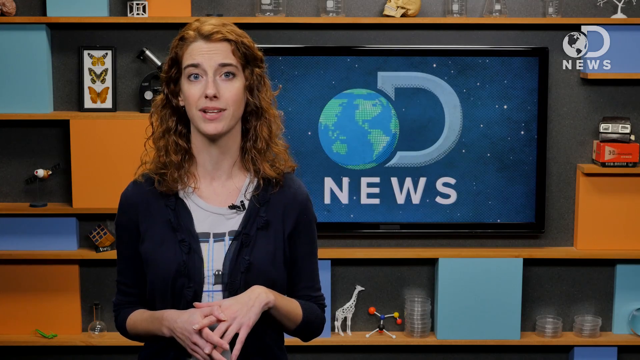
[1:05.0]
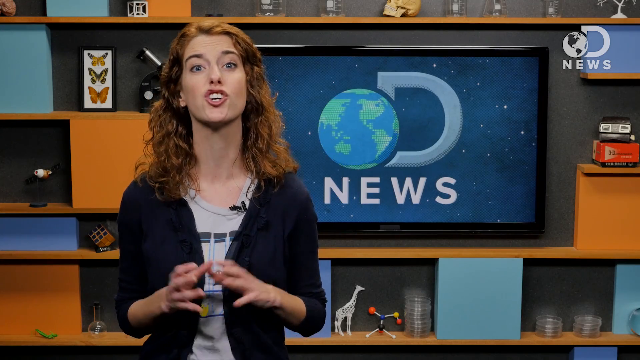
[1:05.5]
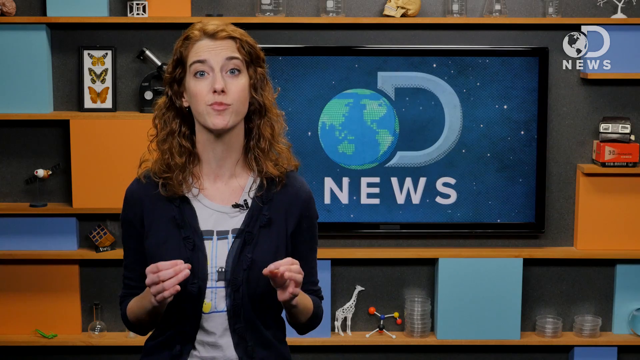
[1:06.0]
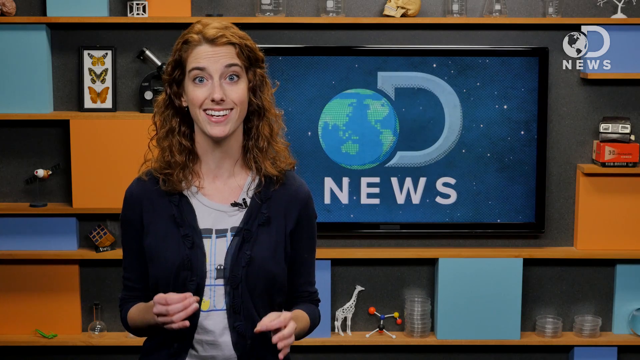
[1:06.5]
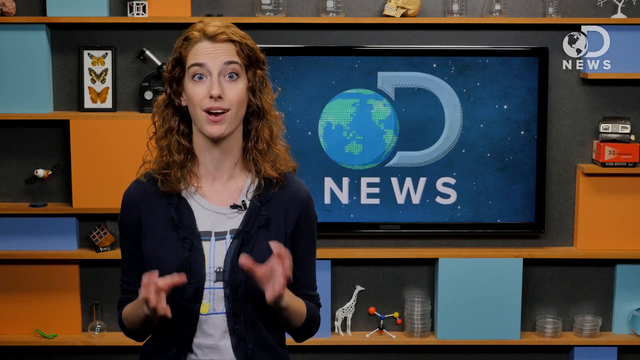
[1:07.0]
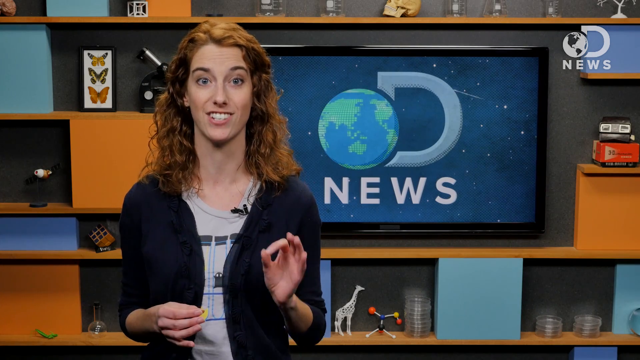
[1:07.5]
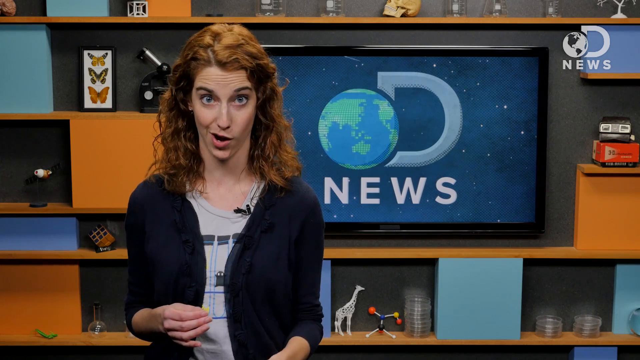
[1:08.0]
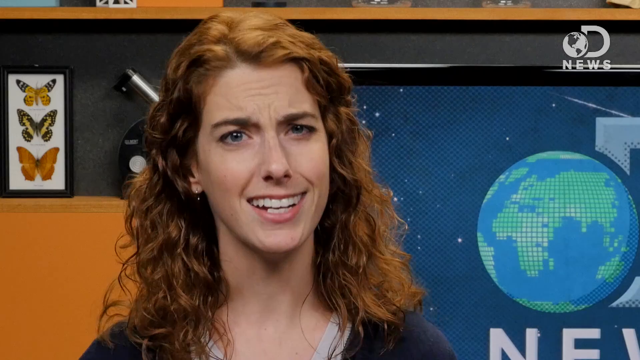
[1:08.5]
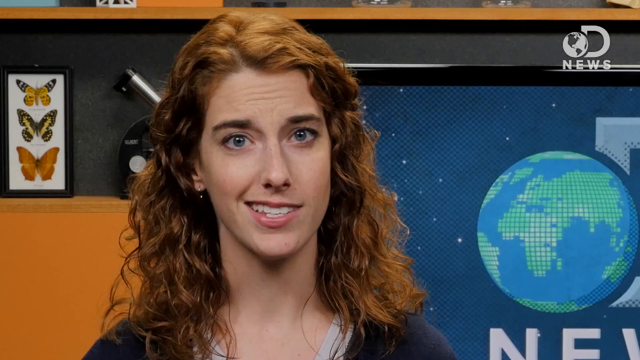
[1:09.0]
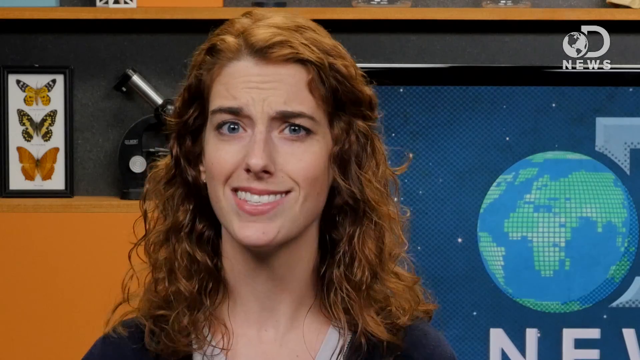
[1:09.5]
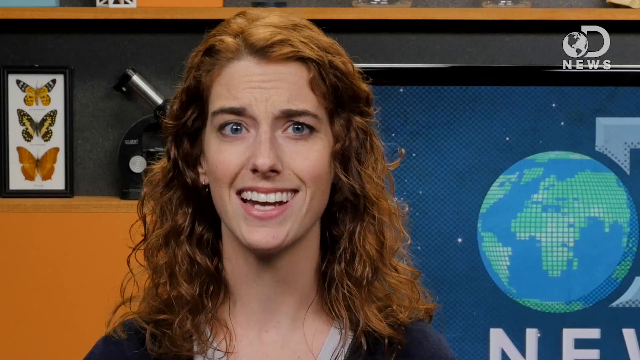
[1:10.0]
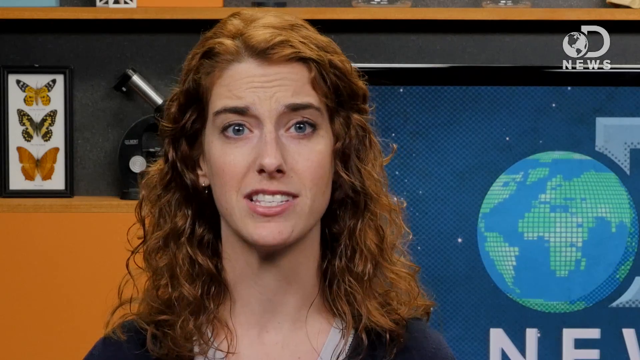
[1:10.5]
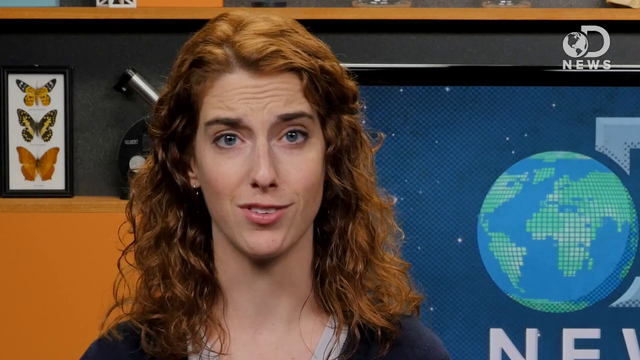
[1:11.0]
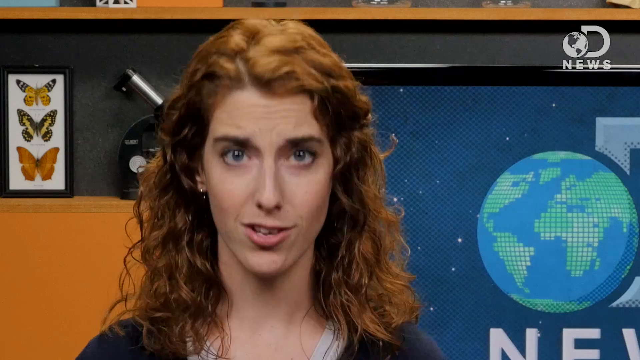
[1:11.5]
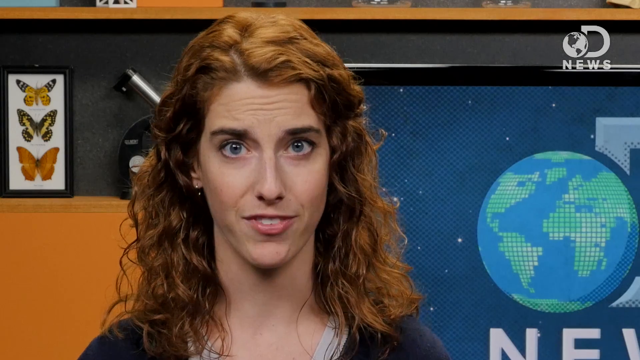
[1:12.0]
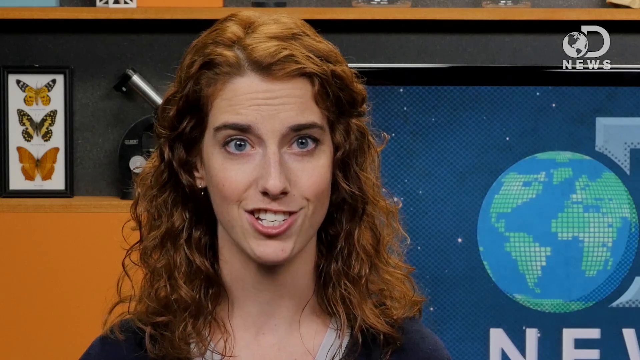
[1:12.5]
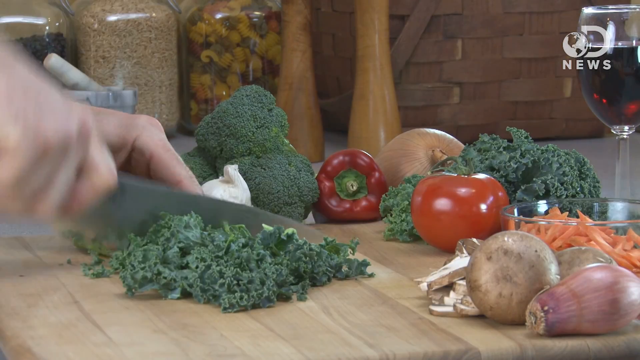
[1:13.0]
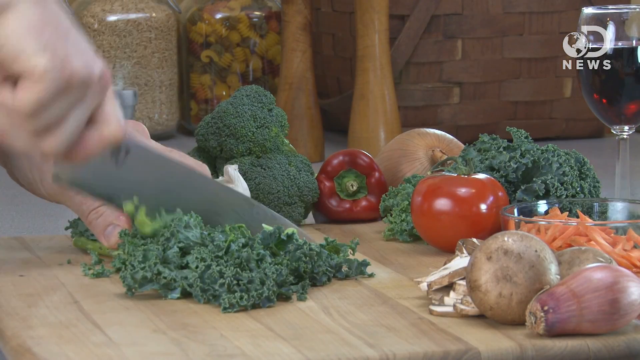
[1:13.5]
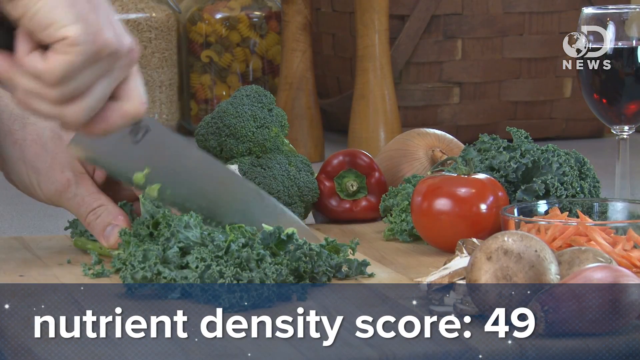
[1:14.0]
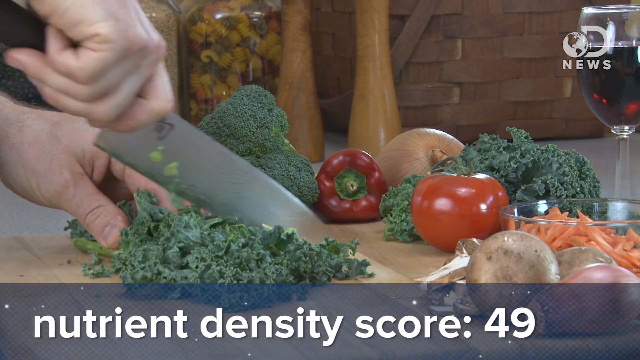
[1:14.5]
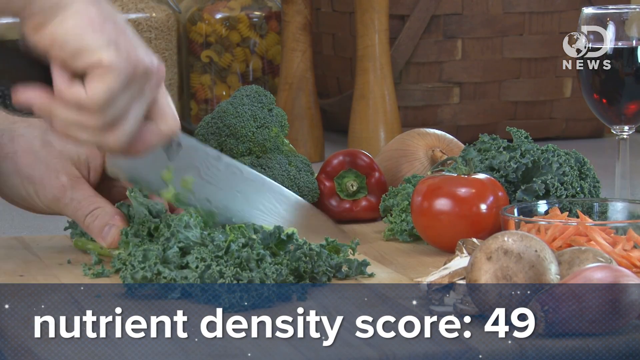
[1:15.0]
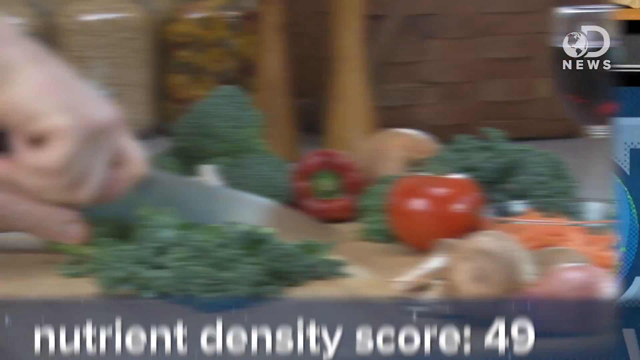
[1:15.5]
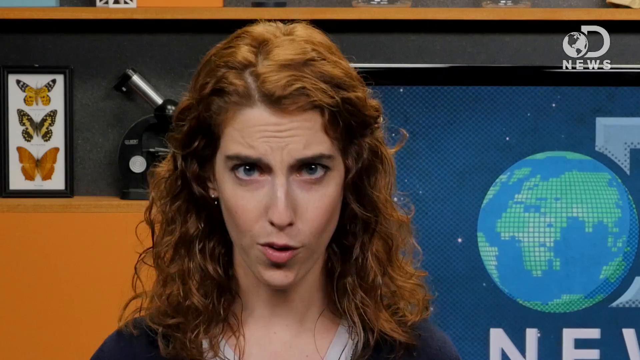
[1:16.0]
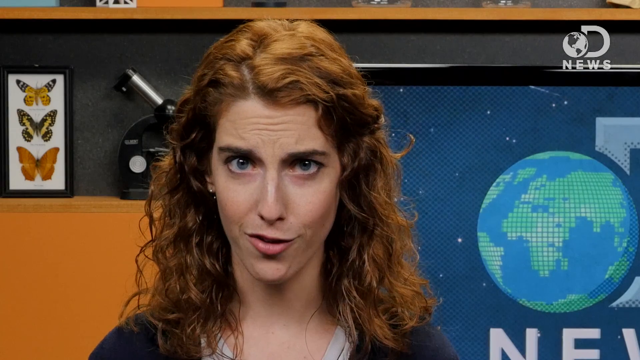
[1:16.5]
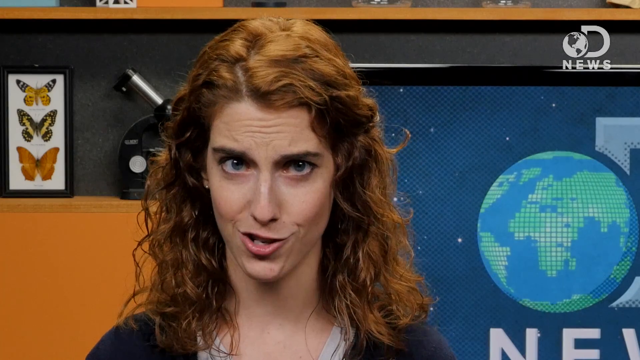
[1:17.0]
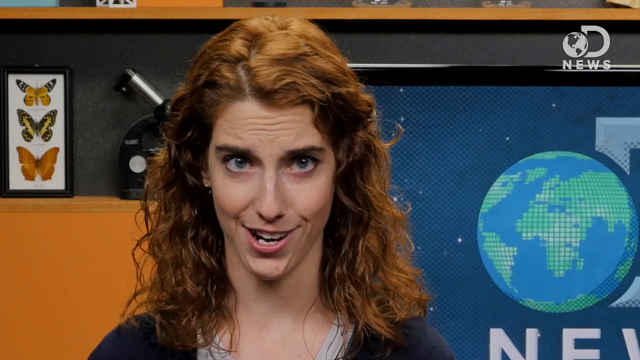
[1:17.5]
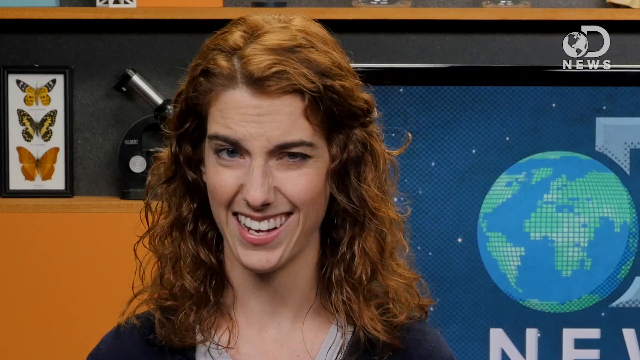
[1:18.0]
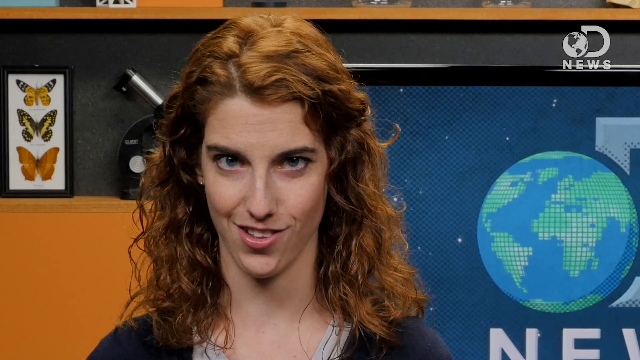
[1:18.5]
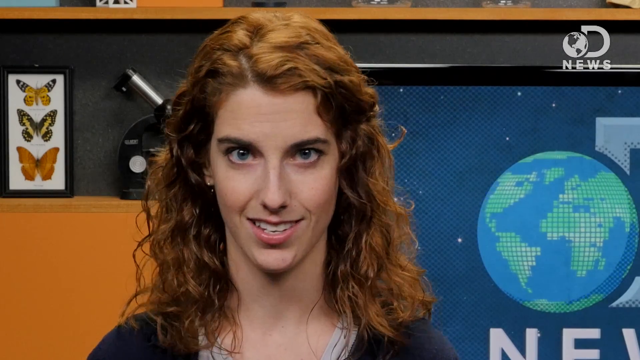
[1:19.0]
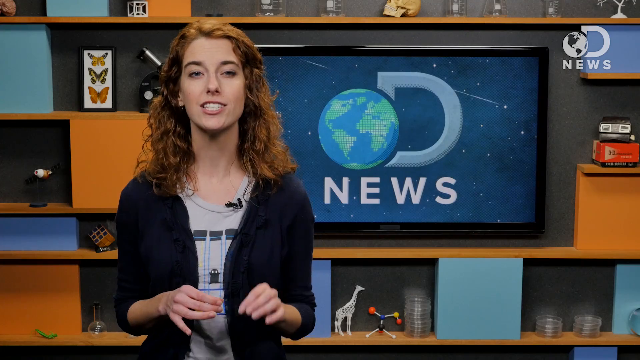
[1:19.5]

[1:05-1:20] A young white woman with blue eyes and red hair speaks to the camera, appearing to stand in a news studio. The background has orange, light blue and black, and a large TV monitor behind her shows a spinning globe icon with the word "news." She is very animated with her facial expressions and hands. The camera cuts away to someone chopping what appears to be kale on a cutting board, with a graphic below reading "nutrient density score" and giving a score of 49. Other vegetables are visible in the scene, including tomatoes, carrots, onions and what looks like potatoes.